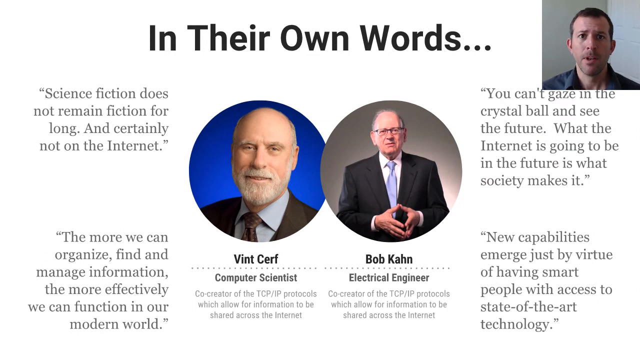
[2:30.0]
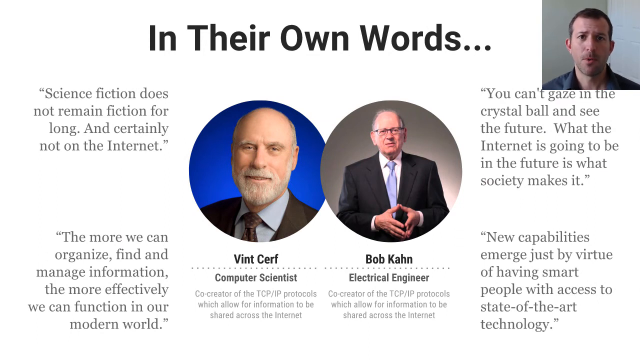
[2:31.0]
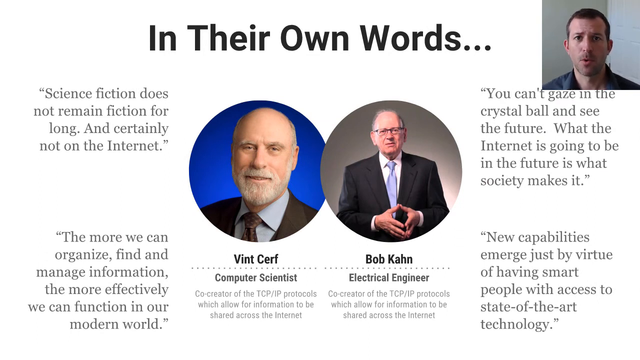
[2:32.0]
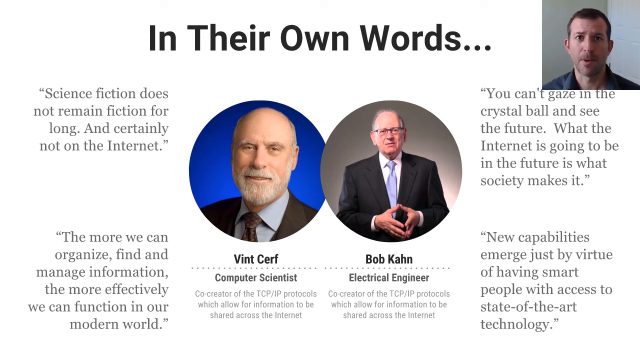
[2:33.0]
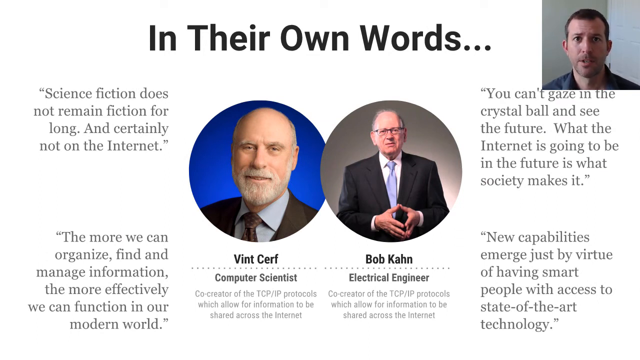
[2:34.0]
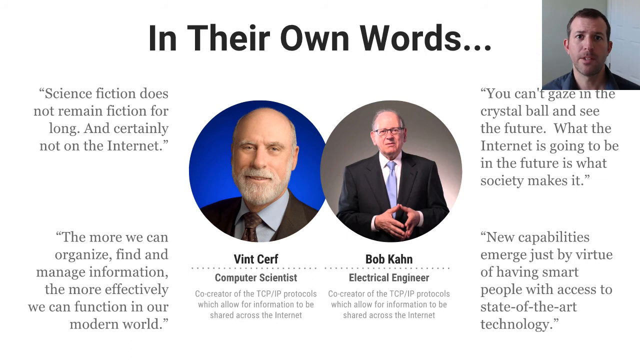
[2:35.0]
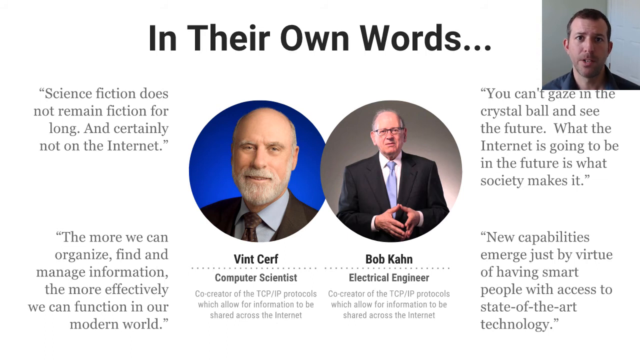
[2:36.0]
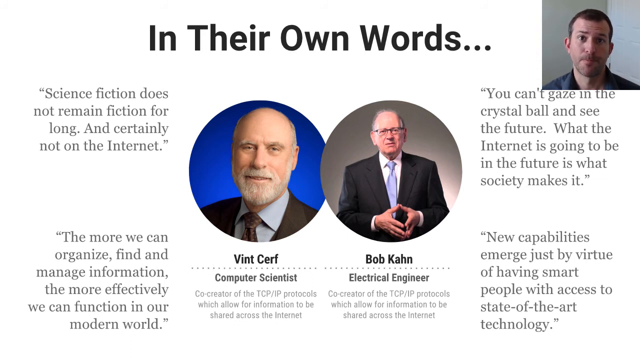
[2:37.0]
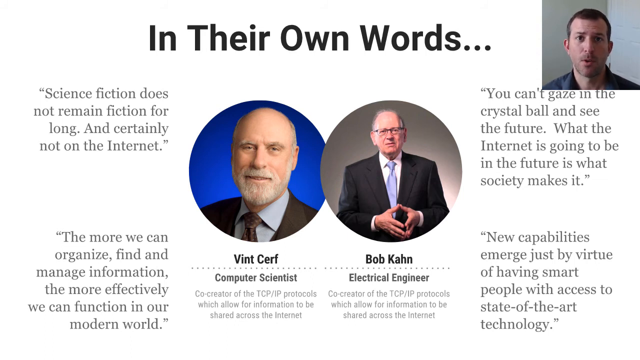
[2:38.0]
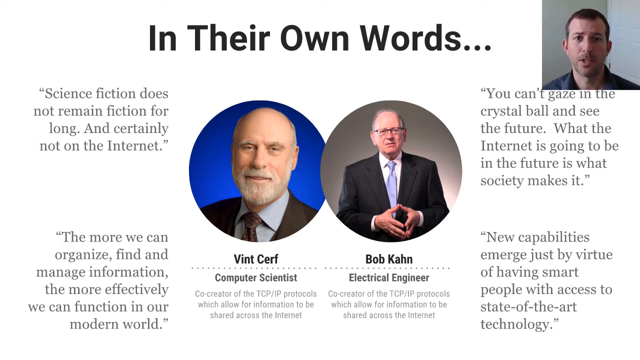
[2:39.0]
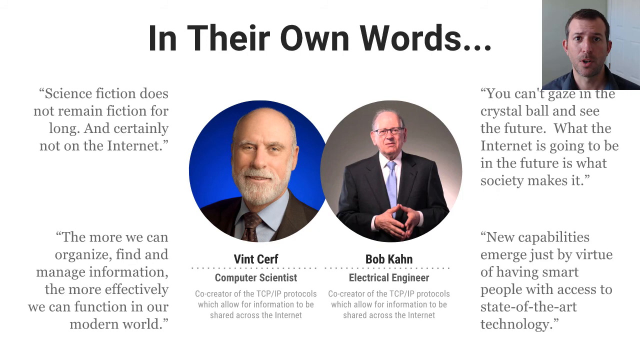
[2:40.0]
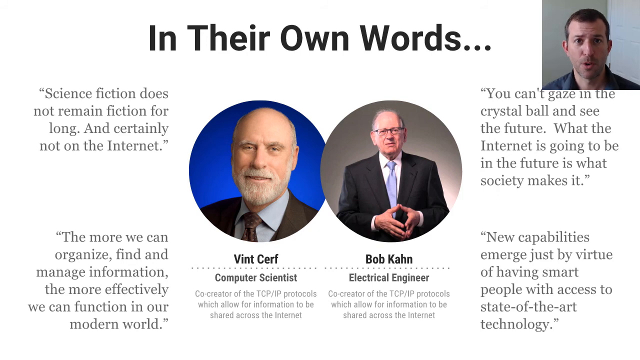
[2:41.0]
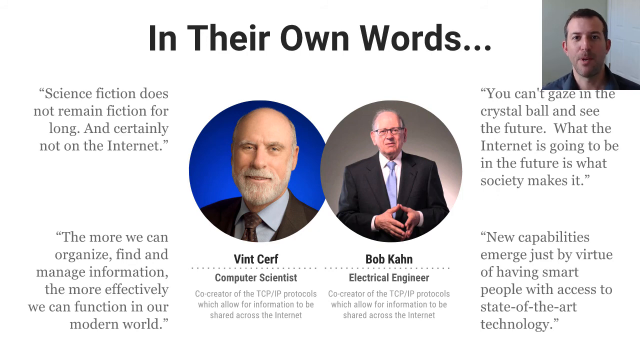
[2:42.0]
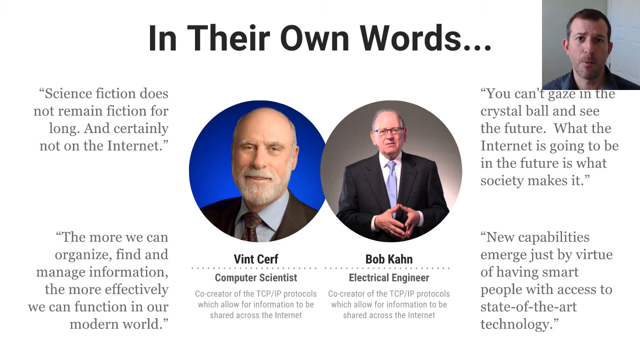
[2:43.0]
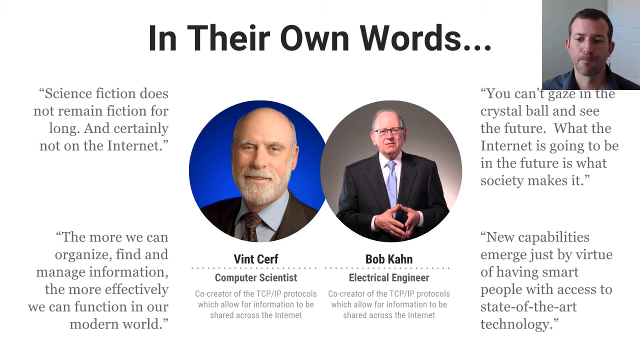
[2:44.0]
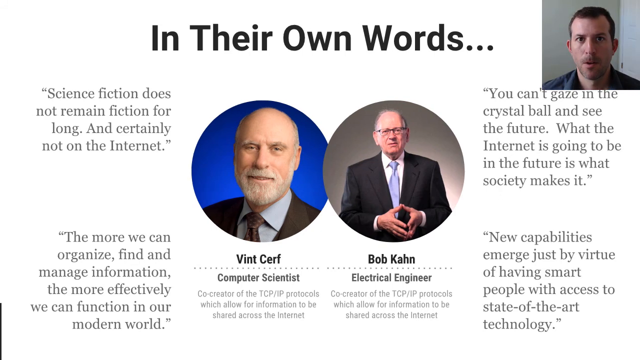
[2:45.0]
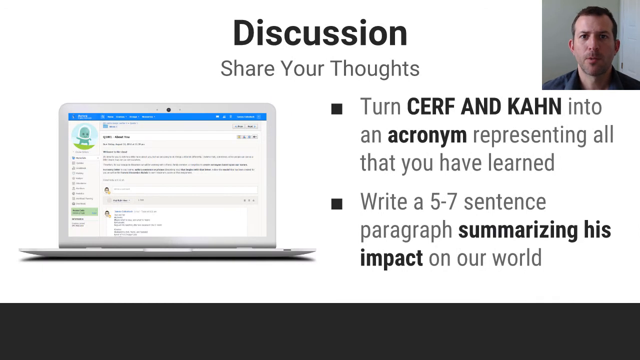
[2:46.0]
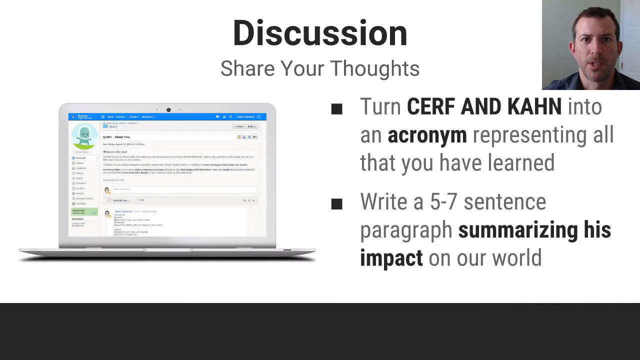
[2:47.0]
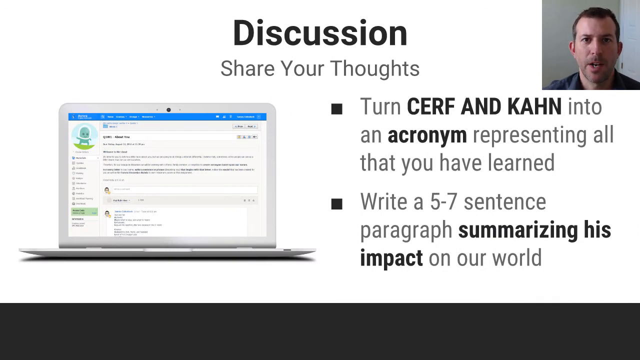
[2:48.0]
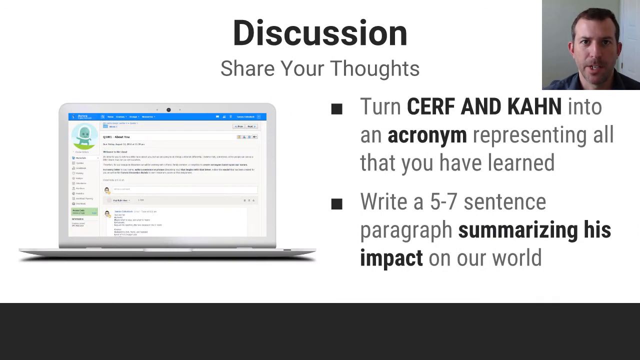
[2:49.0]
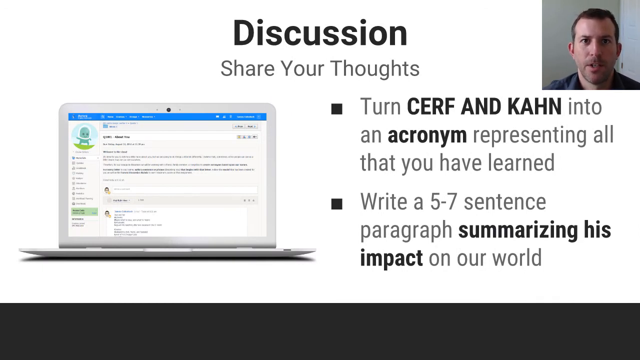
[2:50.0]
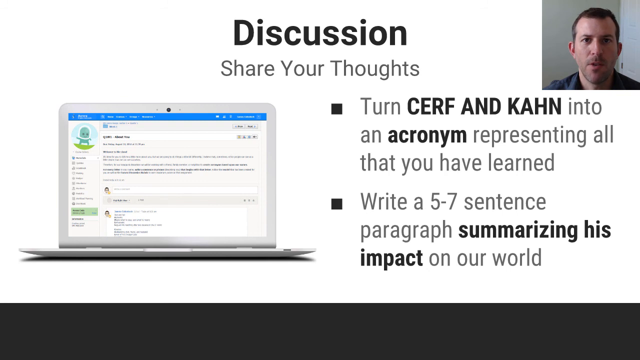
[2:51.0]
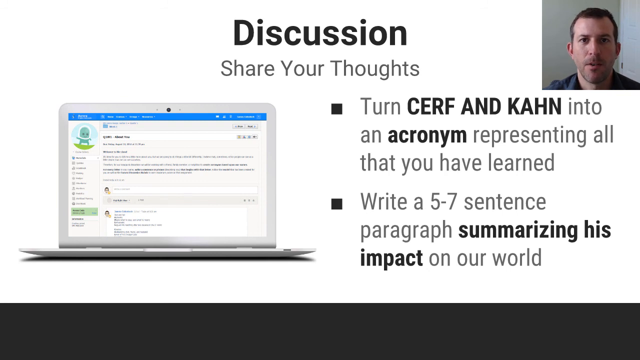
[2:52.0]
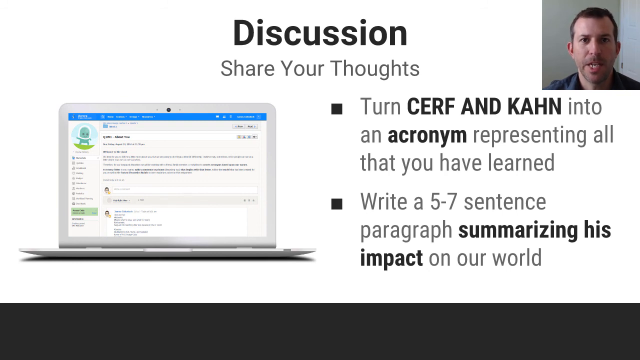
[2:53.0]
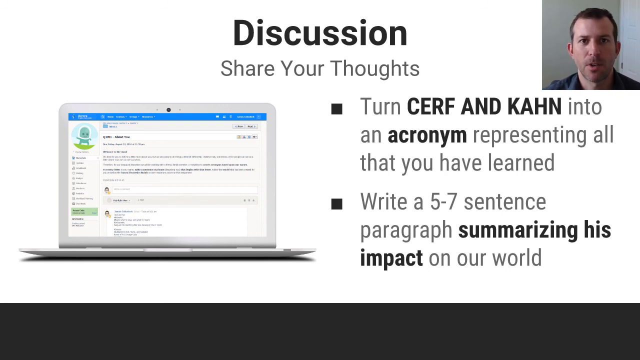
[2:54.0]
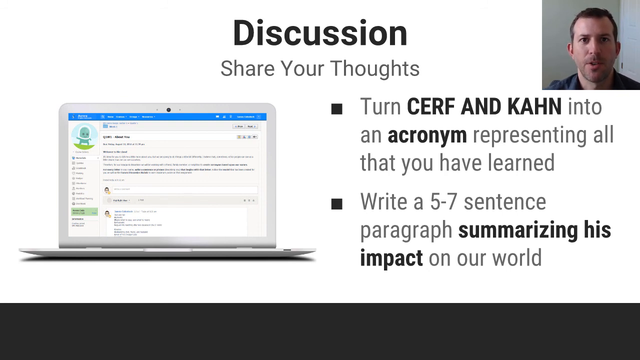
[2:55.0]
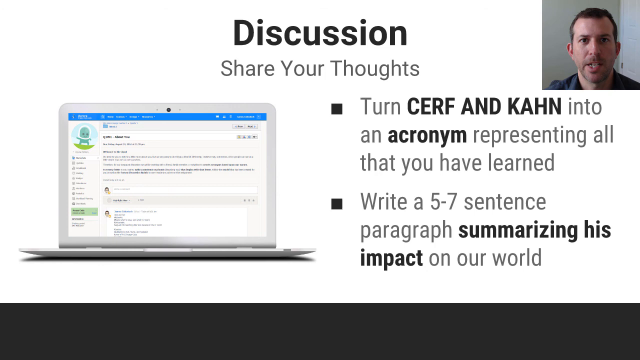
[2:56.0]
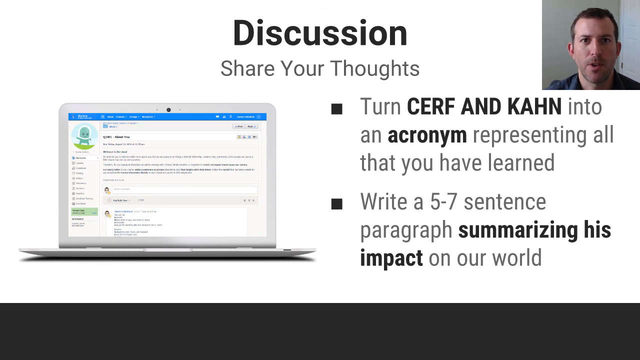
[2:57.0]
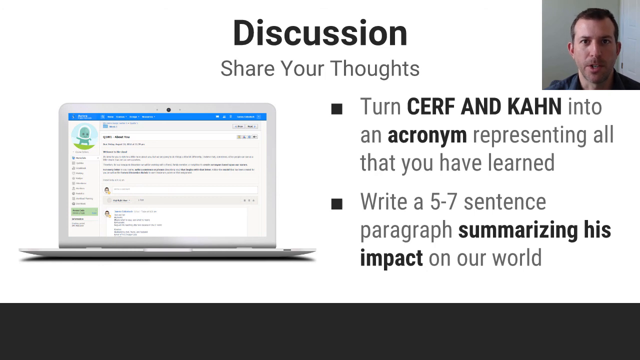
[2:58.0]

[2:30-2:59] The narrator in the video box continues narrating a slide with a white background and black text at the top reading "in their own words...". In the middle are two interlocking circles, with a photo of Vint Cerf in the left circle and Bob Kahn in the right. Under each circle is the person's name, and under each name a short biography. In the four corners of the slide are quotes from the two men. At one point the narrator raises his eyebrows and pauses speaking for a second, as if to drive home a point. A few seconds later he smiles slightly while looking into the camera, the first time he is seen smiling in the video. He looks down towards the keyboard and his shoulder moves as if he is clicking a mouse or keypad, and the next slide moves fast from left to right. It has black text at the top reading "discussion" and grey text underneath reading "share your thoughts". Below that, on the left, is a picture of a laptop with information on its screen, and on the right are two bullet points in grey text with some bold letters. At the end, his lips are closed together in a slight frown, apparently indicating that he has finished talking.